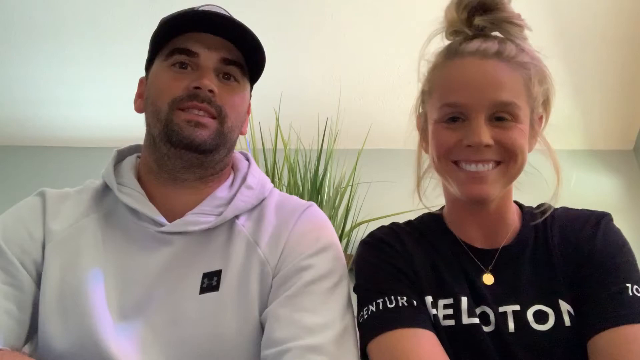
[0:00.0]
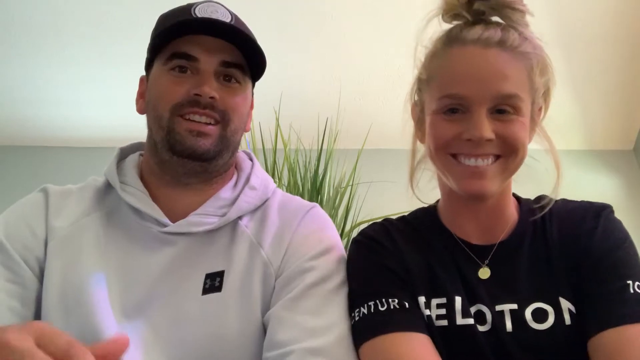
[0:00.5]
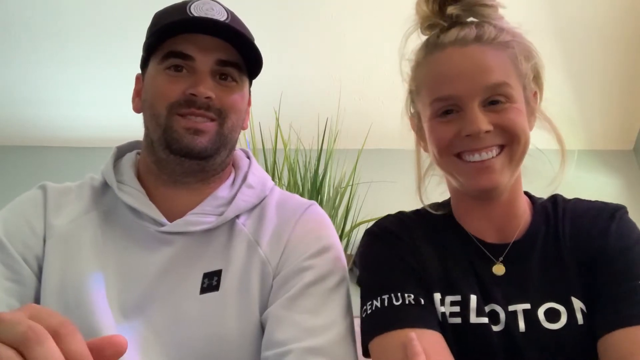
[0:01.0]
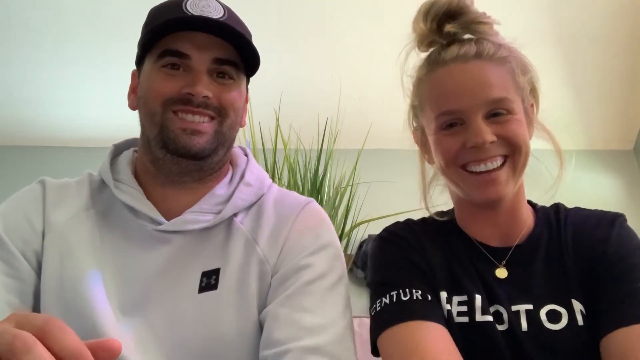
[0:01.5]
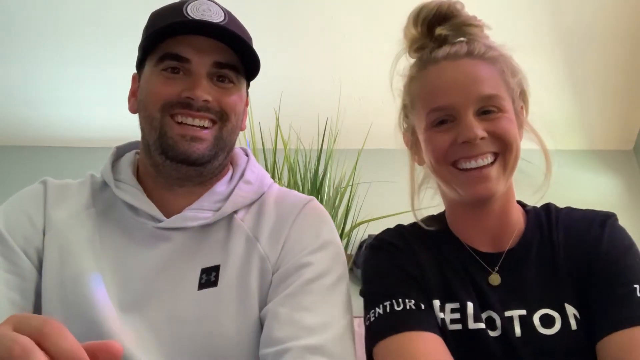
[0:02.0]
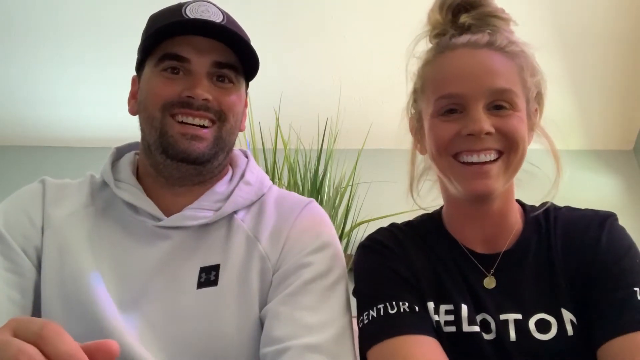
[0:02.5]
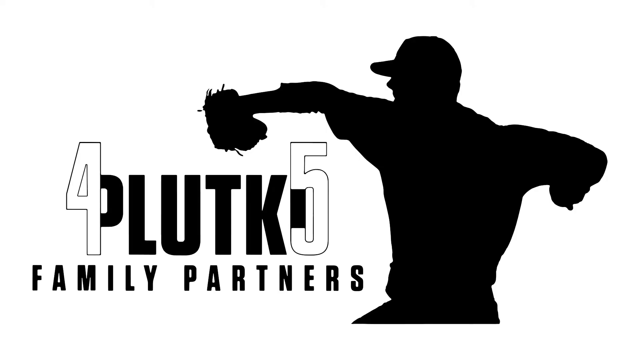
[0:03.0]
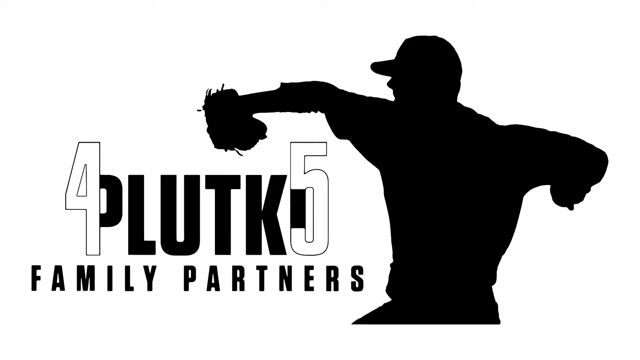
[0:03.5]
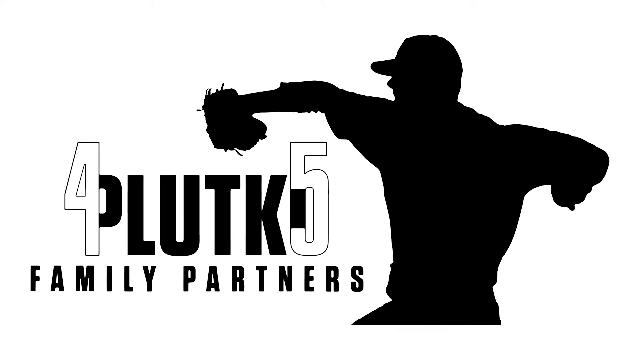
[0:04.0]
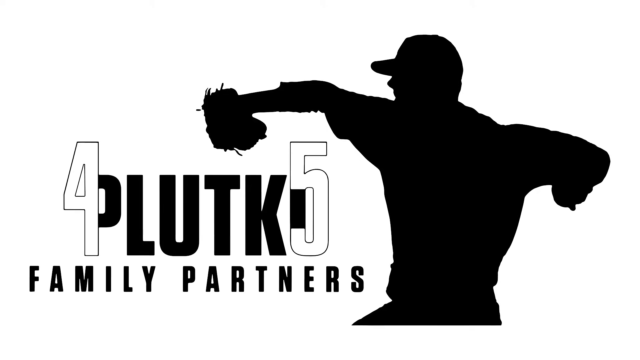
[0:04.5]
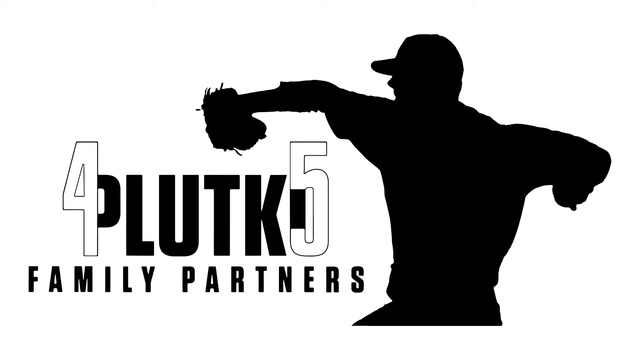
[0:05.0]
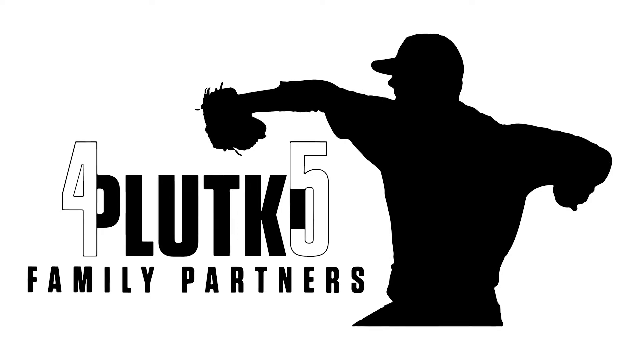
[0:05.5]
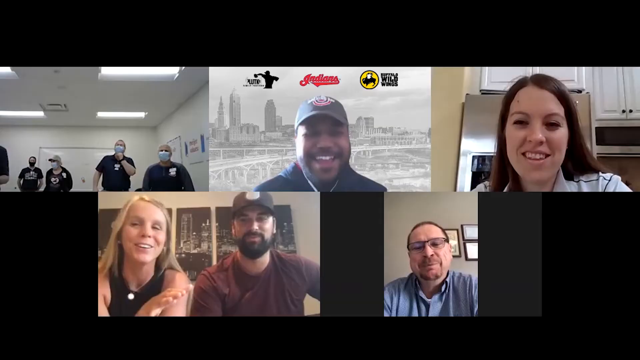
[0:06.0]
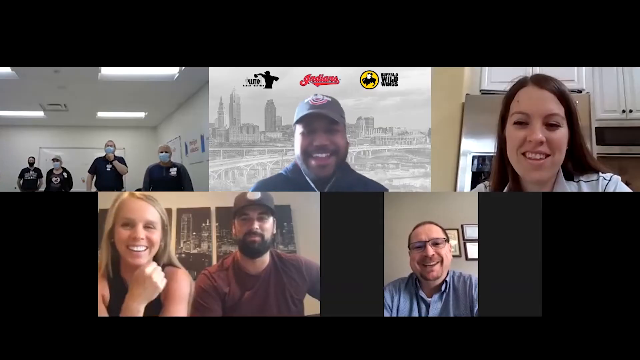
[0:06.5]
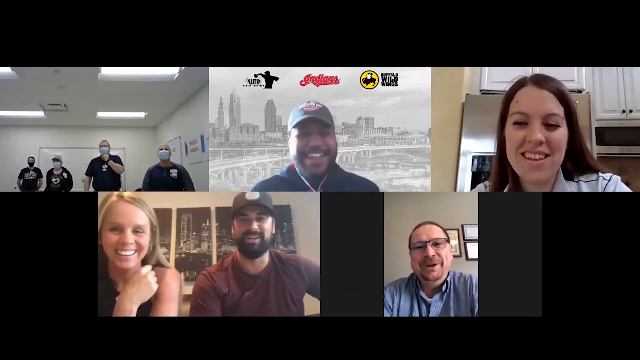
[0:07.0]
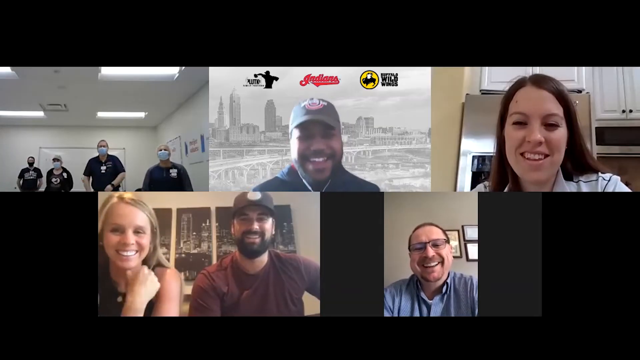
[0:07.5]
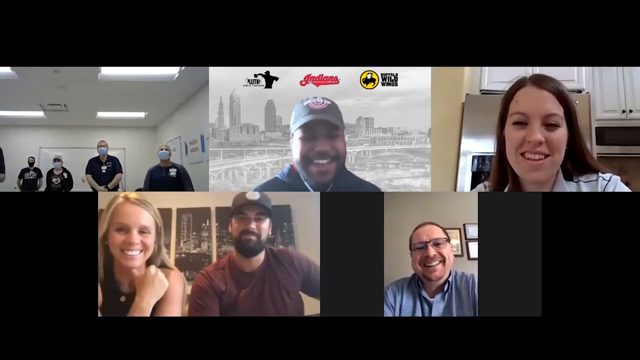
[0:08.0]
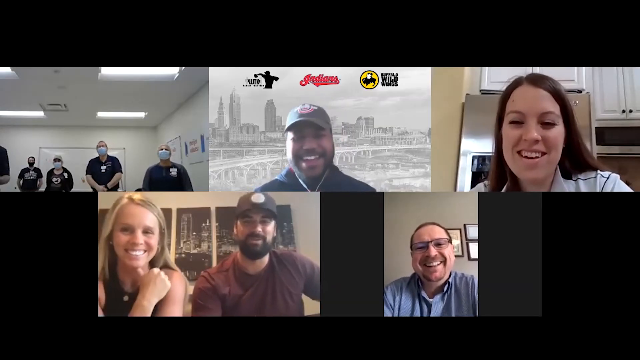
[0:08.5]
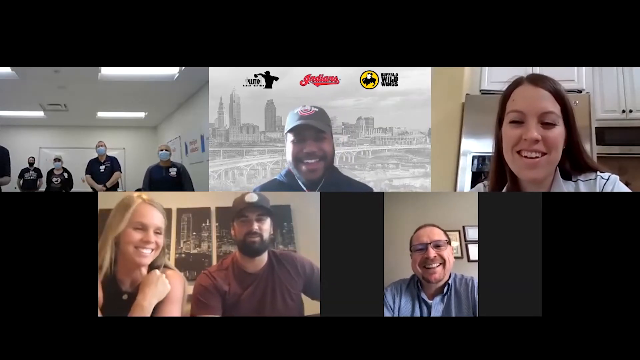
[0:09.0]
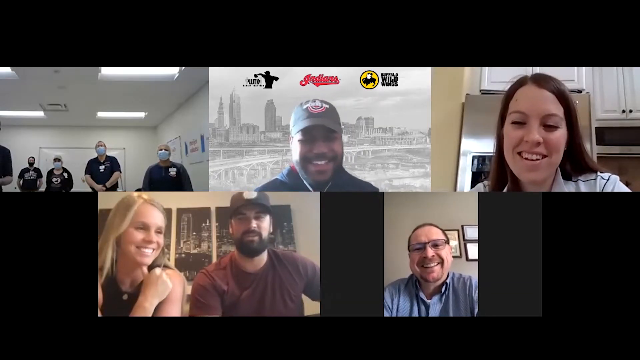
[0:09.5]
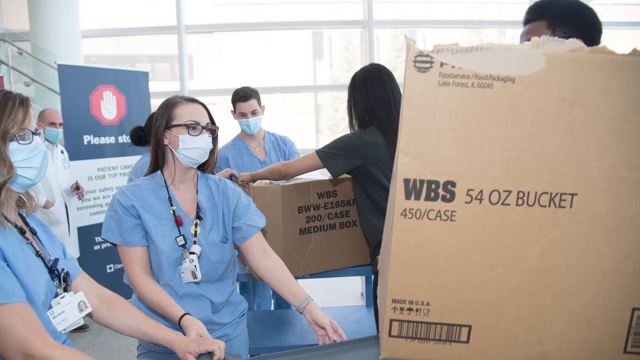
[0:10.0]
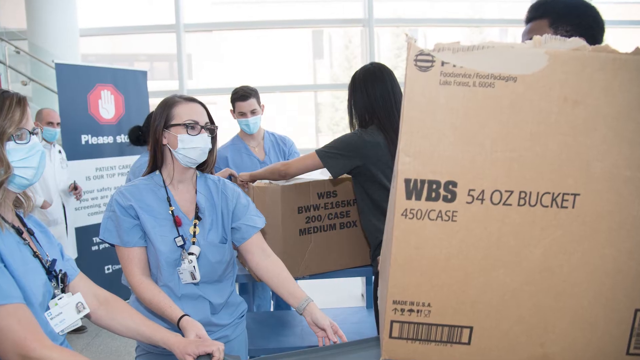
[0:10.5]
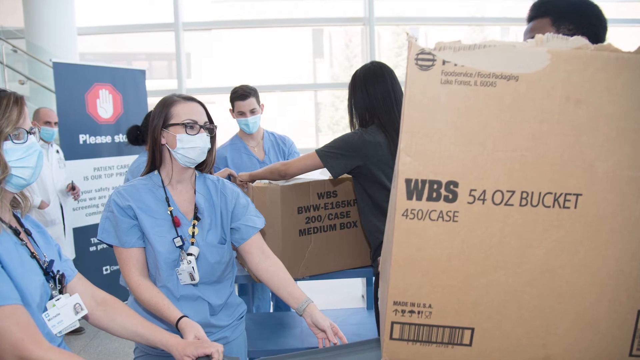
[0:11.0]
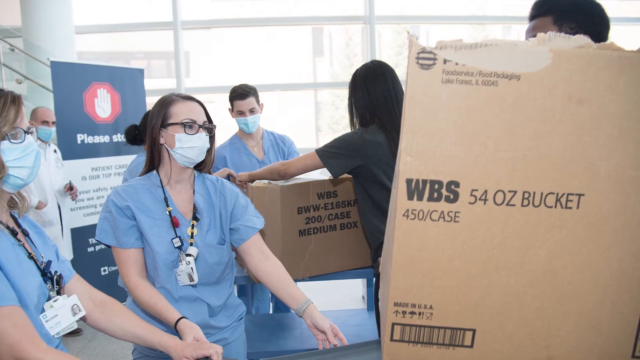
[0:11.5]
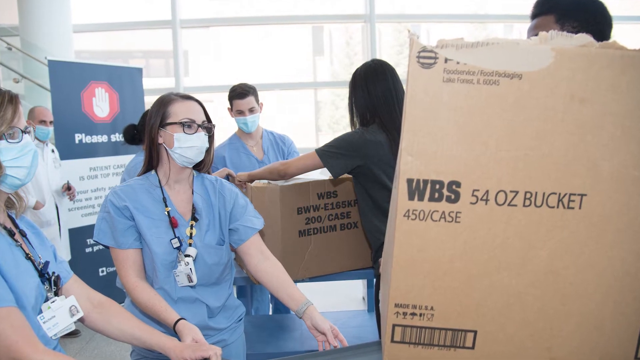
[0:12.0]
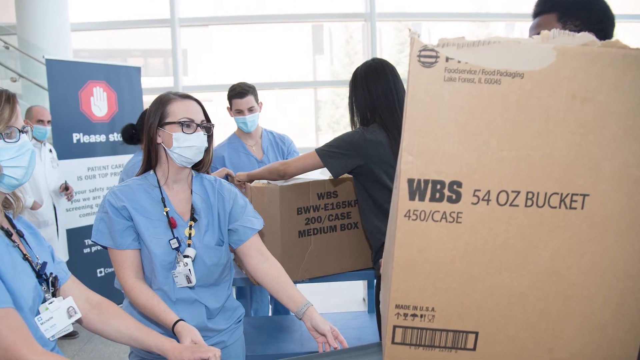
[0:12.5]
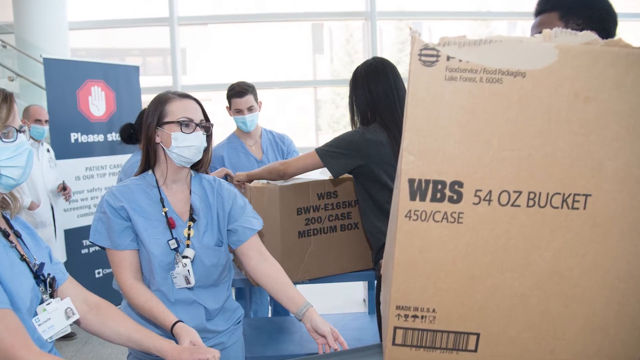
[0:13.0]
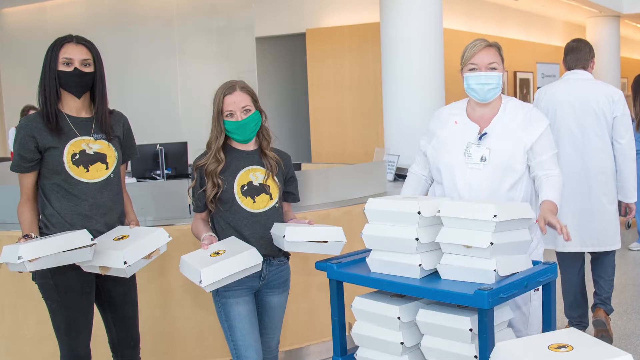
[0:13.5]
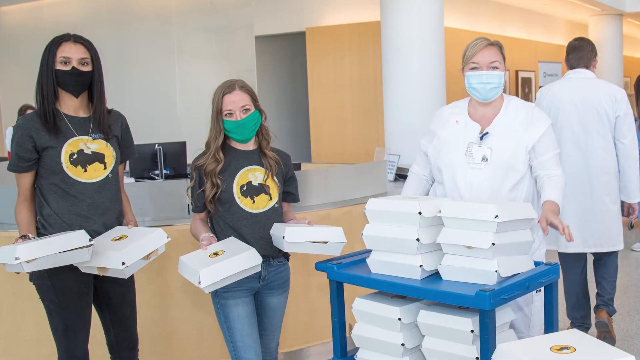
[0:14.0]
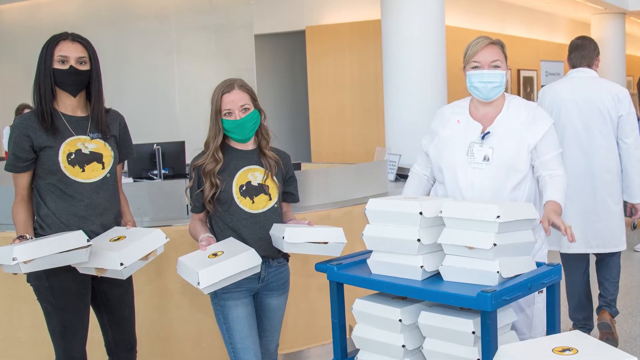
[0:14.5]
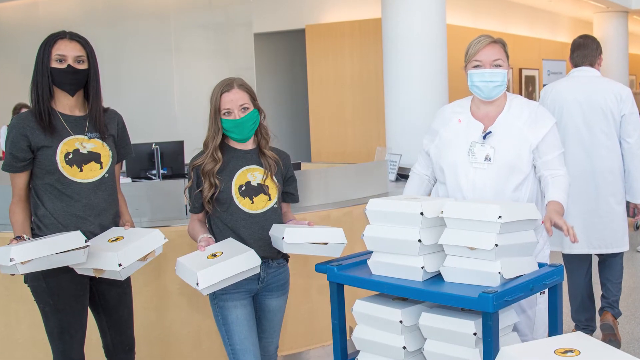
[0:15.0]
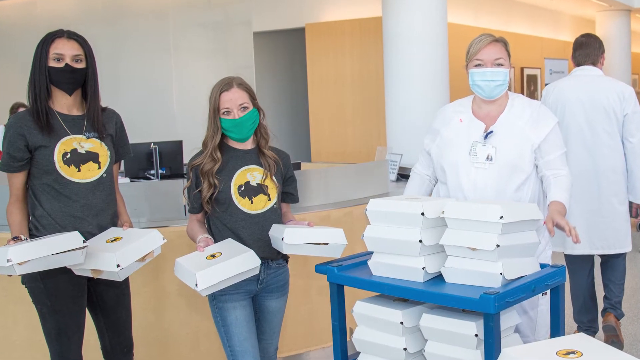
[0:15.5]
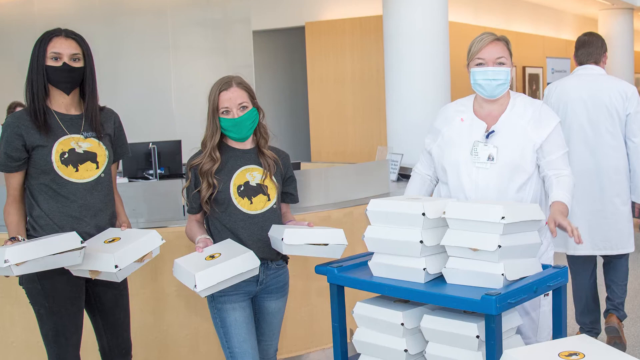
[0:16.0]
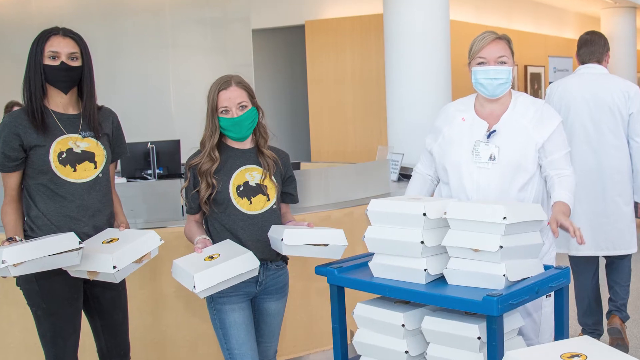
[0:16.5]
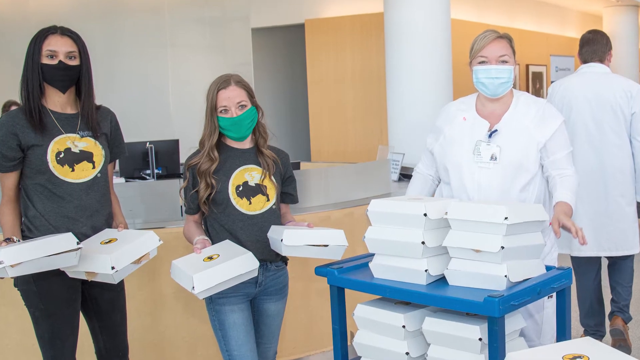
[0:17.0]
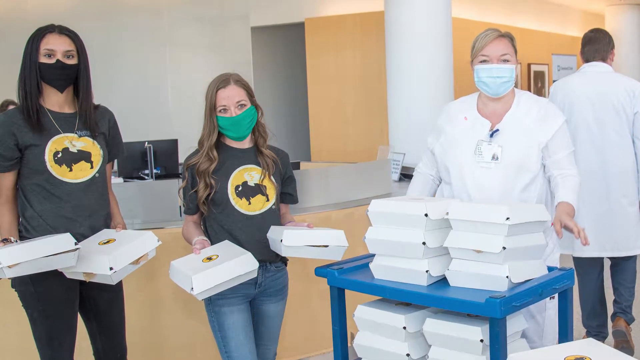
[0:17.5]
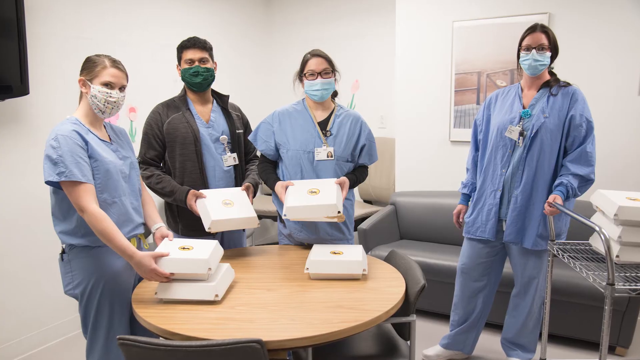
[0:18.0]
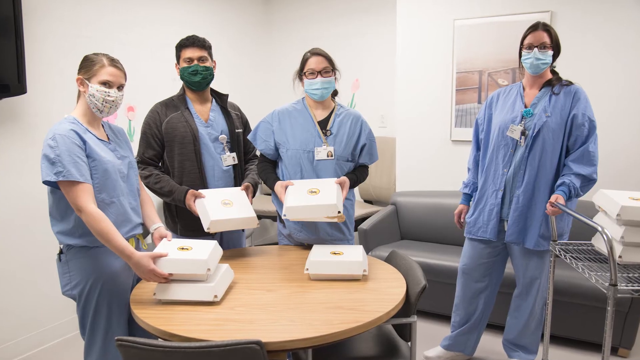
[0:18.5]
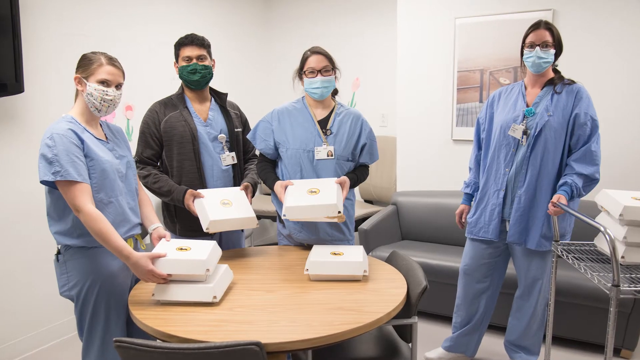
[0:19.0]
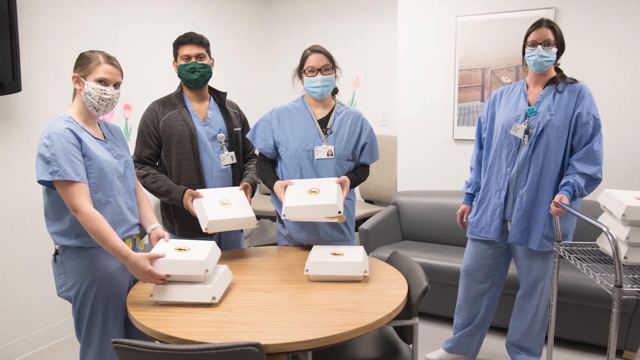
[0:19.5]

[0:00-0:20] Two people sit in front of the camera, apparently in some sort of room. The man on the left wears a white hoodie and a black hat; the woman on the right wears what looks like a black shirt and has her hair up in a bun. Both talk to the camera. The video then switches to the words "family partners" along with what looks like a baseball player. A series of images follows showing people, seemingly on a video call: in one, about four people are in a room together; in another, someone sits by themselves; another shows a woman sitting alone; then two people who appear to be a couple sit together, and a man sits alone. Next, what appear to be doctors in uniforms and masks hold boxes, and the video cuts to people holding what look like food dishes or trays, wearing face masks and shirts with a buffalo on them, apparently in a hospital.